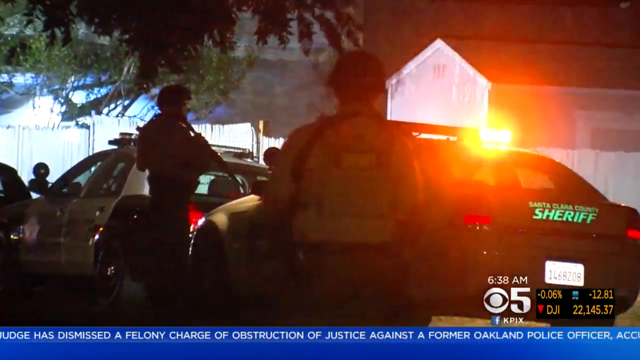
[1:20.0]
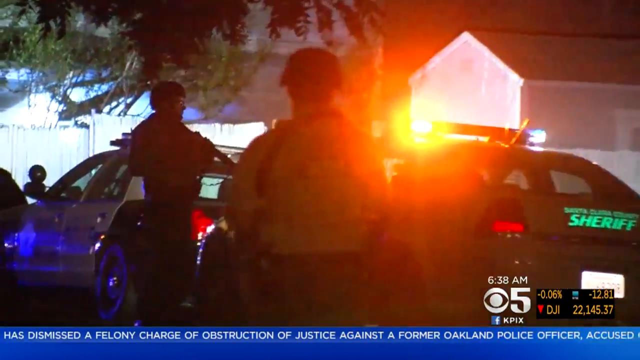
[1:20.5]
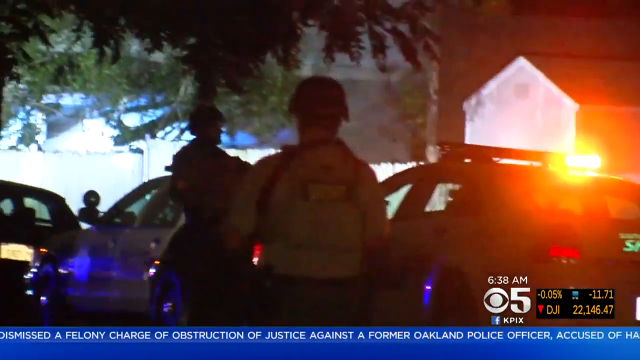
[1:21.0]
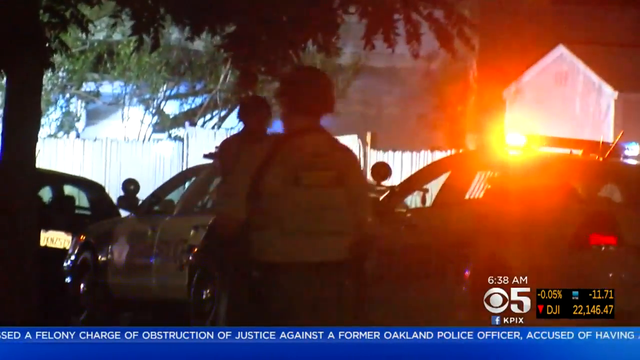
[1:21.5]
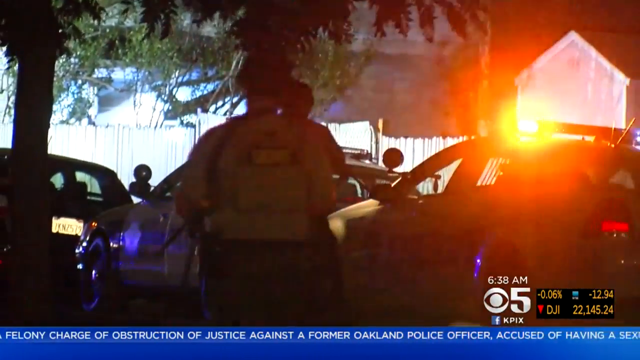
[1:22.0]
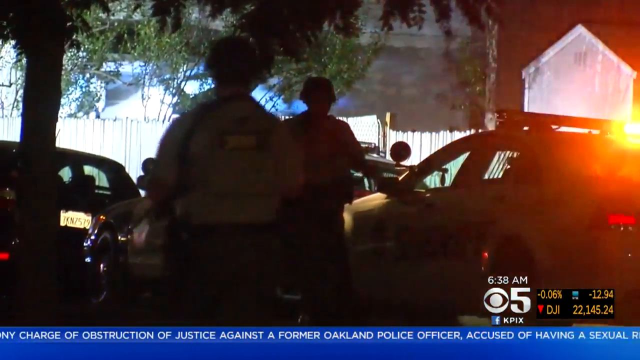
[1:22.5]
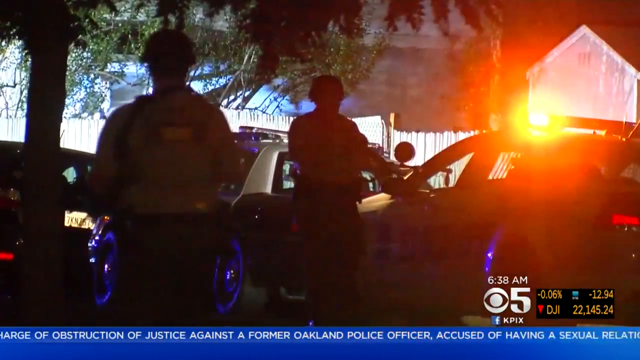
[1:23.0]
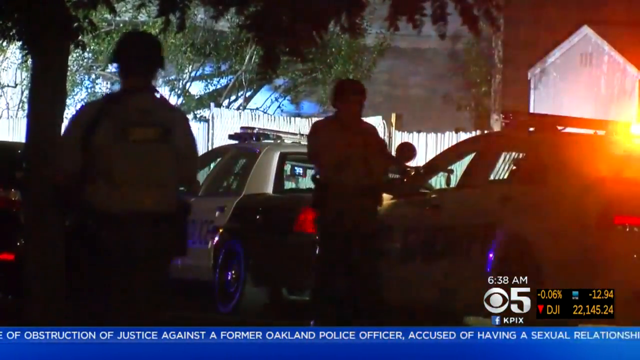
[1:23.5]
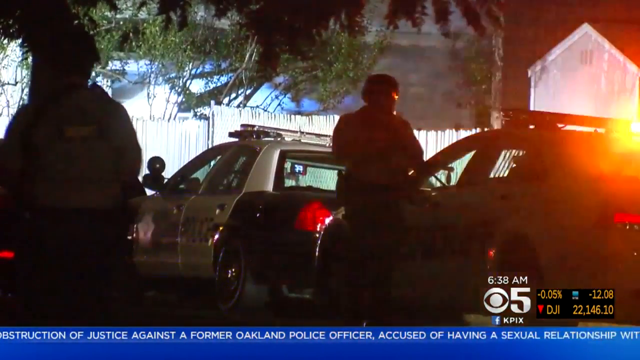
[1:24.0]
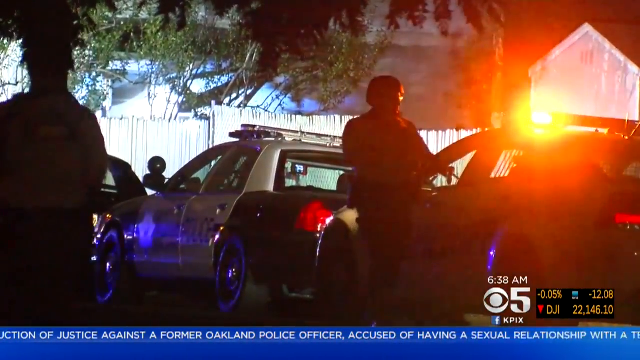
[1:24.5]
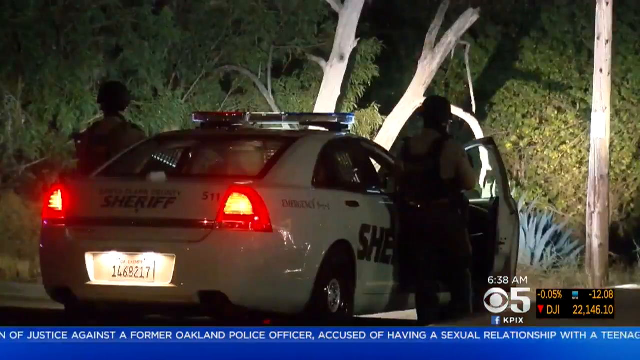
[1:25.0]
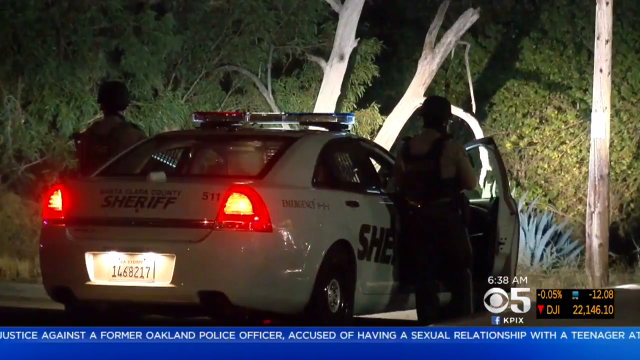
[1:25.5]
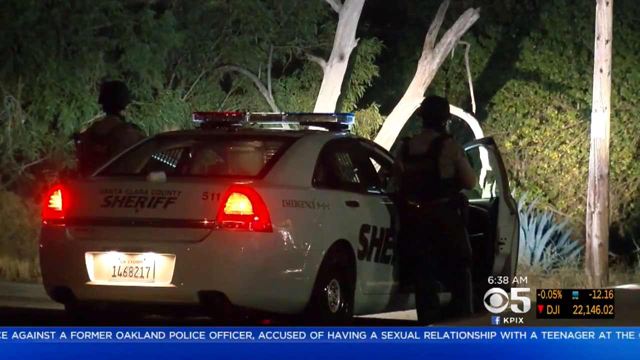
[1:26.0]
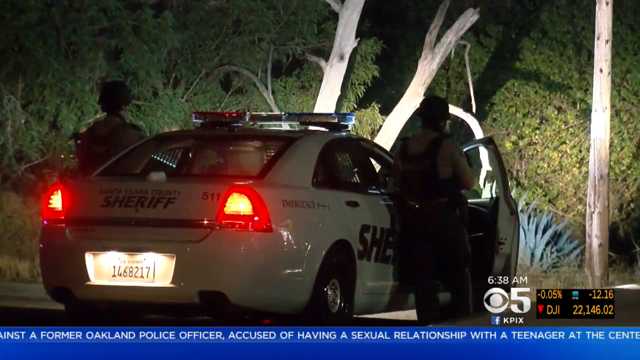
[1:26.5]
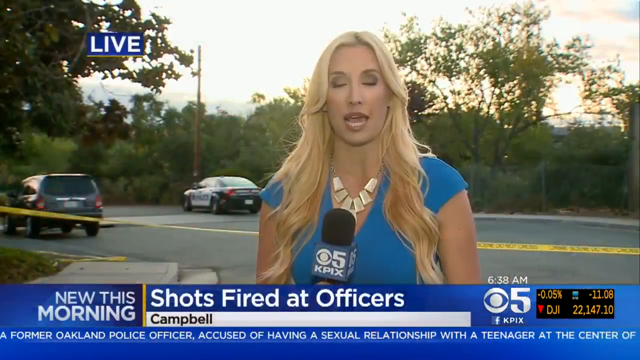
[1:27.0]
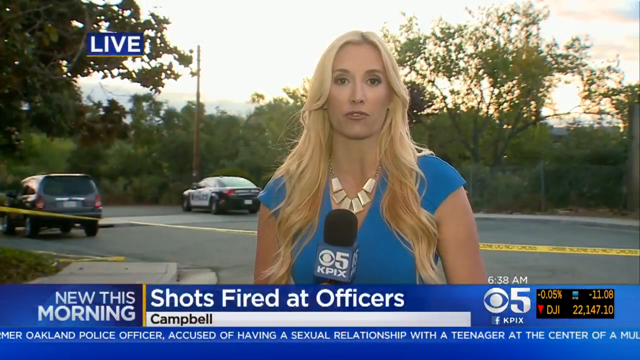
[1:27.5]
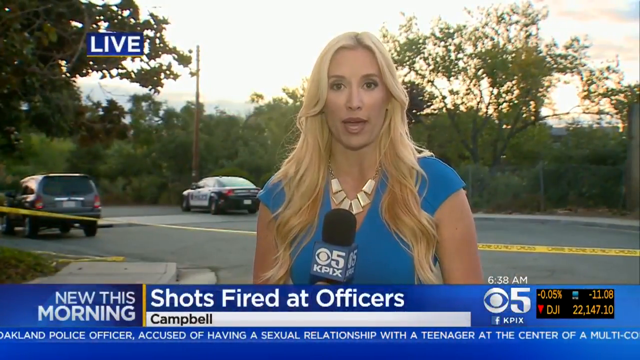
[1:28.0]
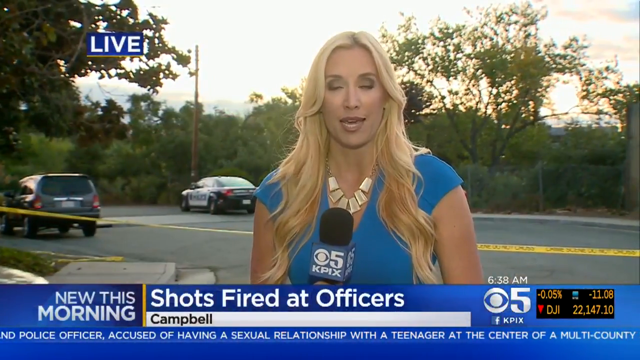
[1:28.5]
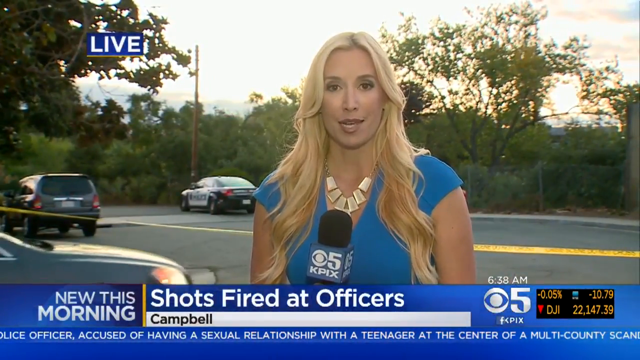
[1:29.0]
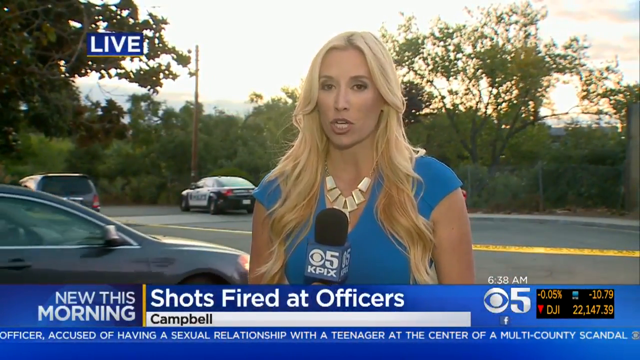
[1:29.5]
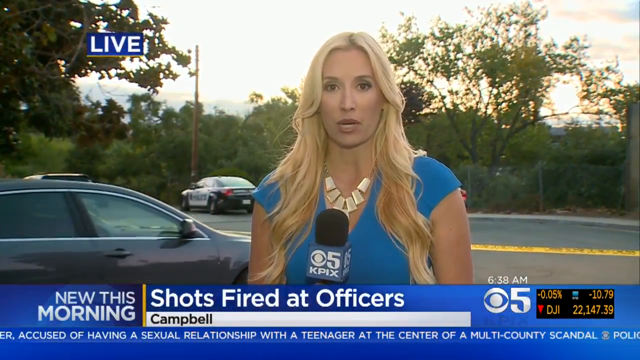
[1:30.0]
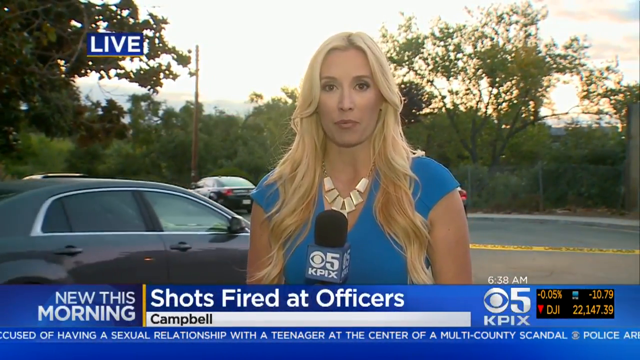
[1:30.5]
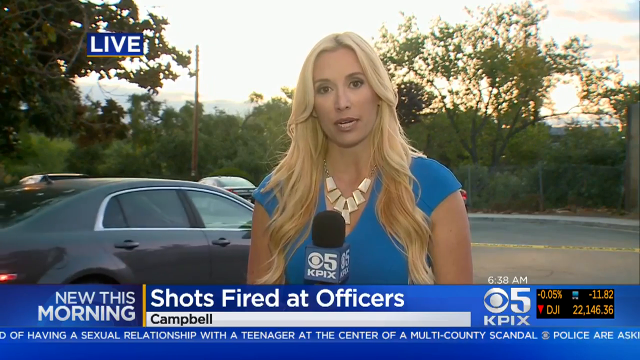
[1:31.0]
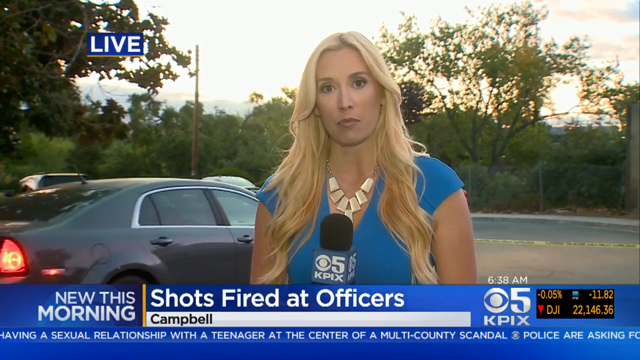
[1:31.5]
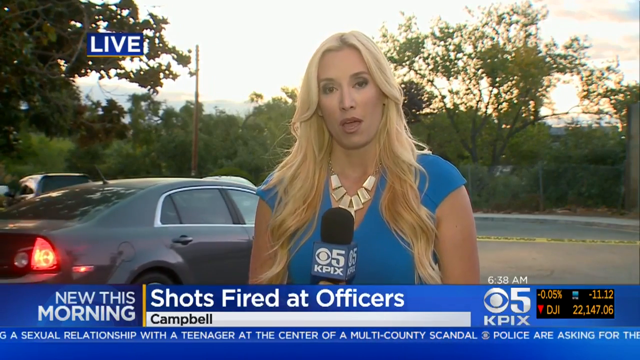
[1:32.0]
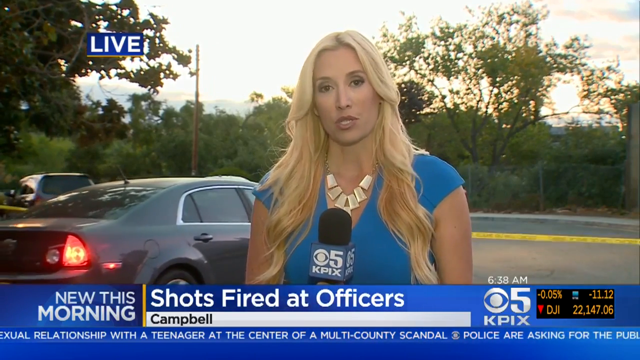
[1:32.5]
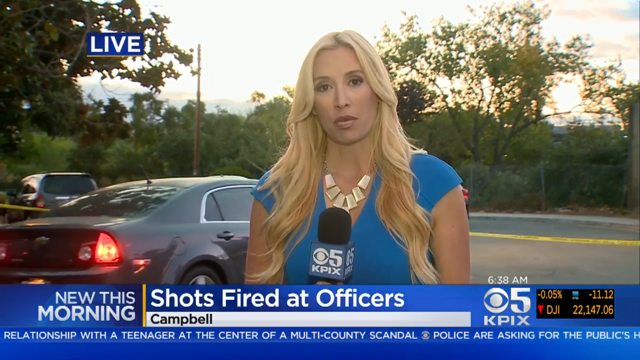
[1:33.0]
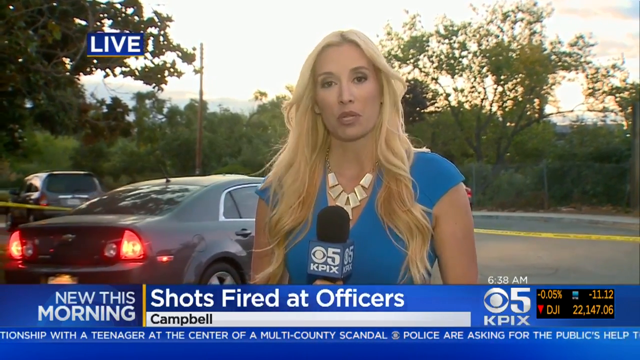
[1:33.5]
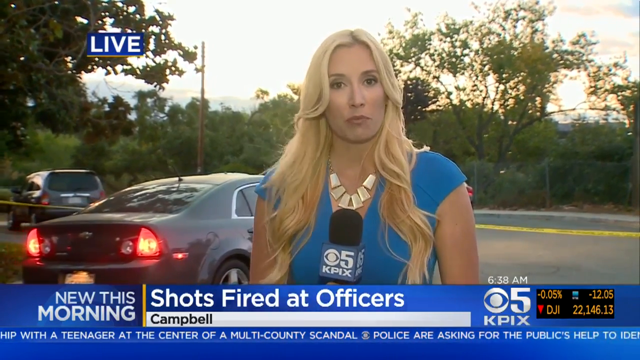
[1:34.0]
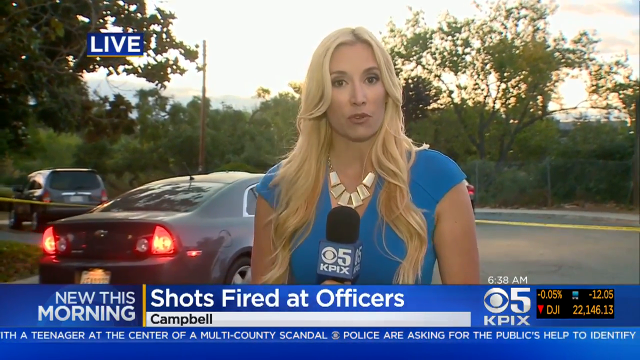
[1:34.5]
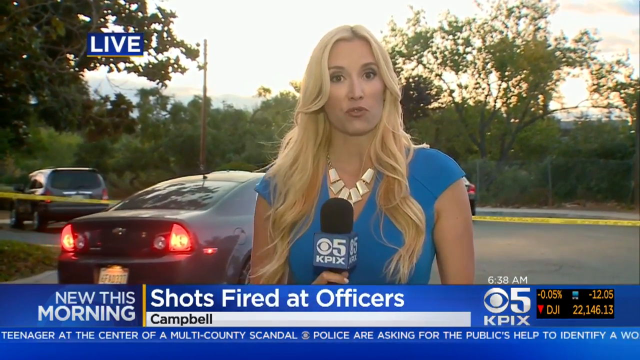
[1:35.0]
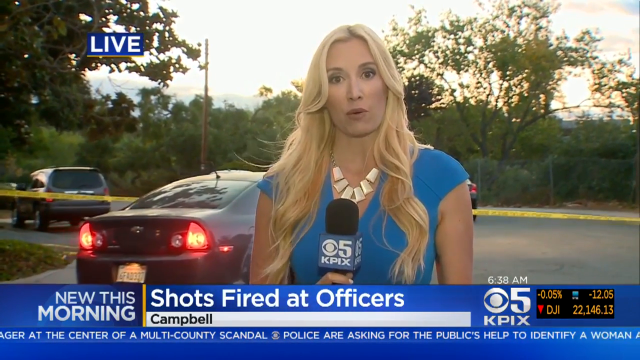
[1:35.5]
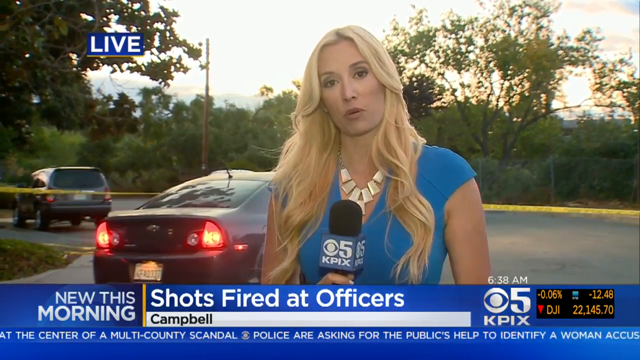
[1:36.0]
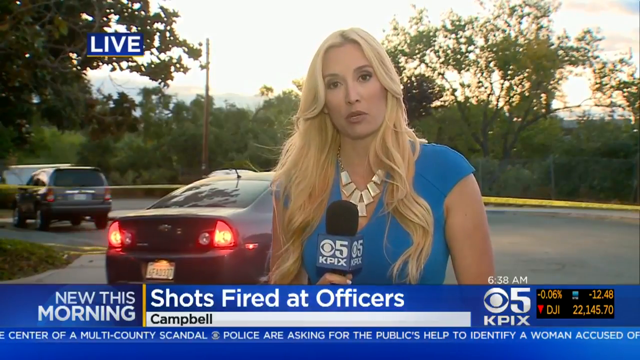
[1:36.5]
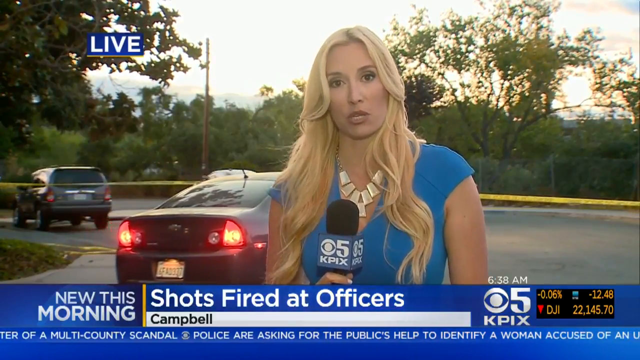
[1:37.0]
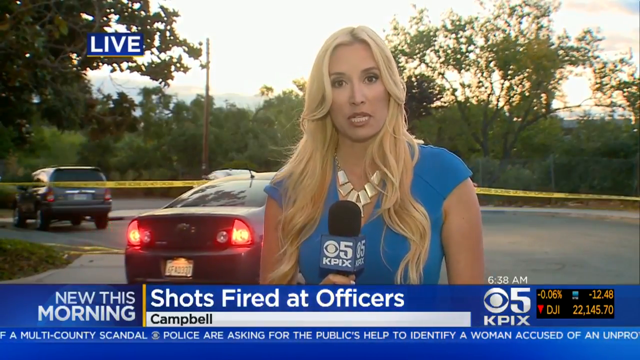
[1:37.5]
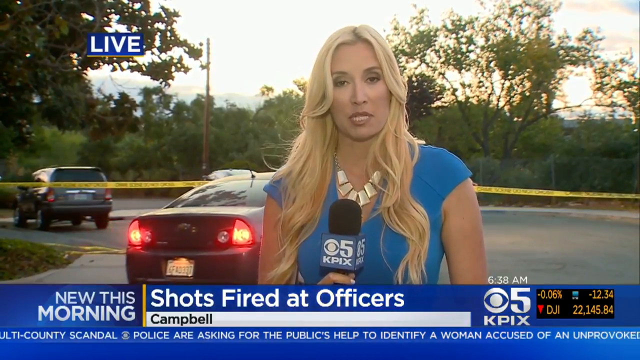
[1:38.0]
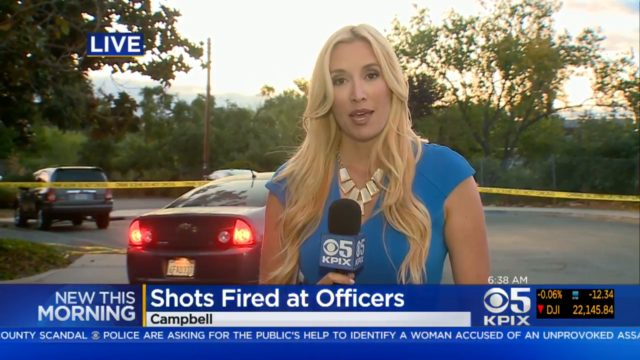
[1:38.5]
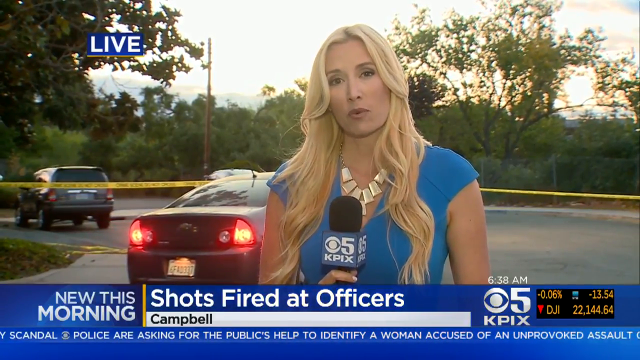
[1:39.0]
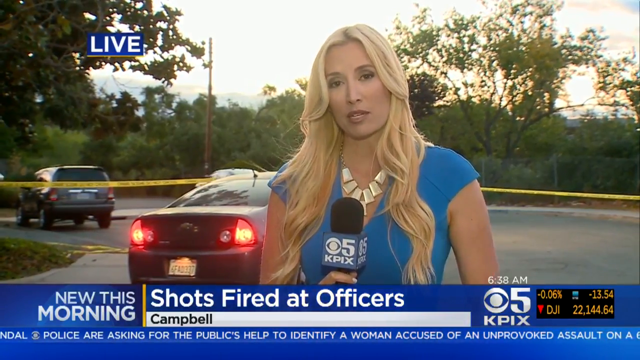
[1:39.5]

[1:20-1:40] The reporter continues her live report at Camp Bell, standing on the street with the tape and the cars still behind her. As she reports, a car passes by her and goes through the tape placed across the road; the driver seems to be someone working with the police. Elsewhere, police shine lights into the bushes as they continue to patrol the area. Some officers stand looking over and around, holding their guns in their hands.